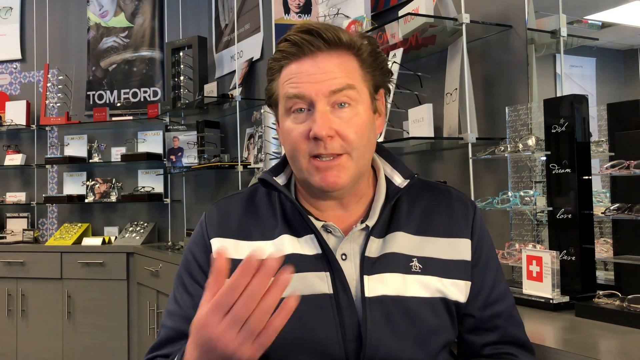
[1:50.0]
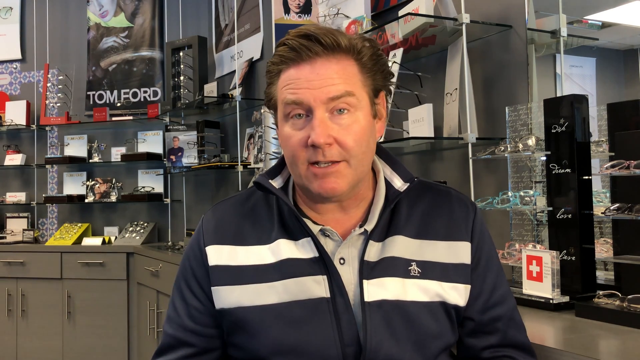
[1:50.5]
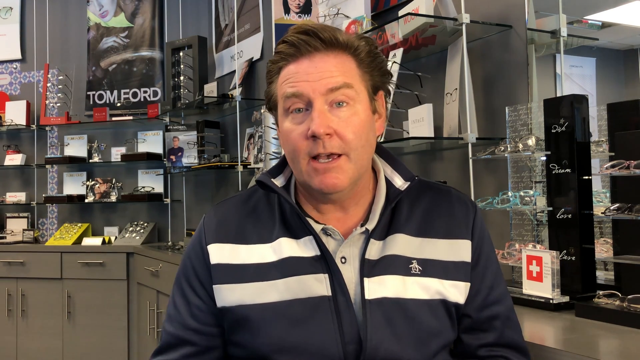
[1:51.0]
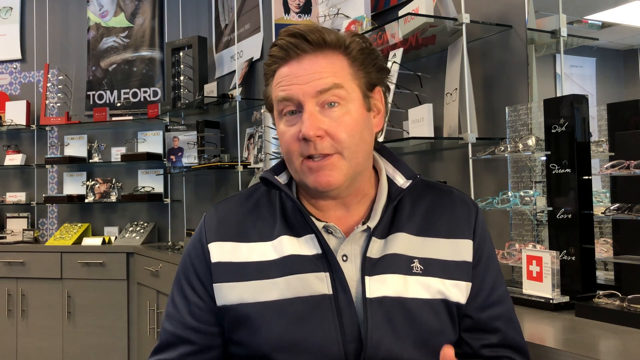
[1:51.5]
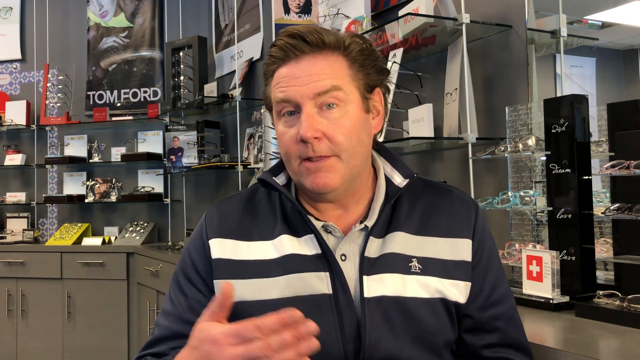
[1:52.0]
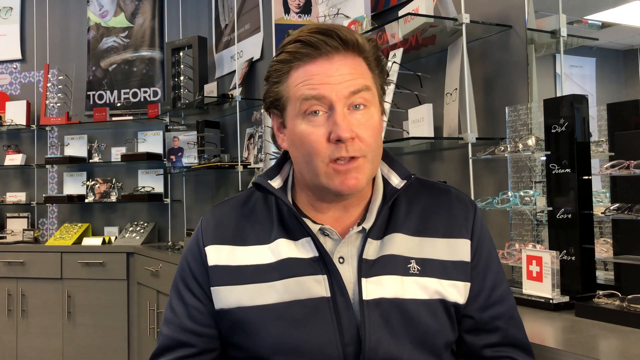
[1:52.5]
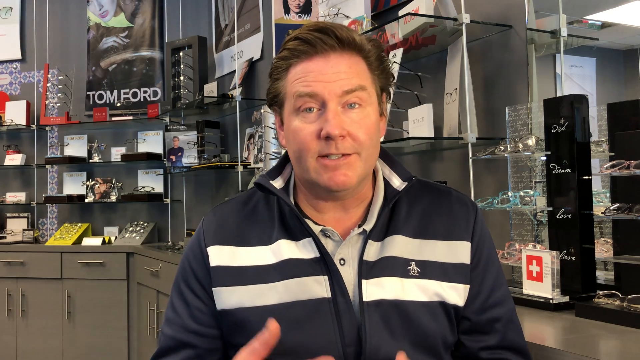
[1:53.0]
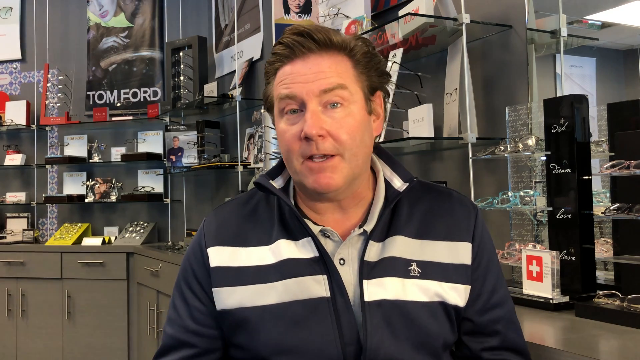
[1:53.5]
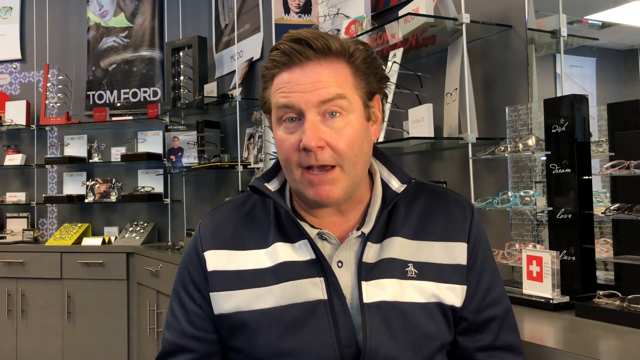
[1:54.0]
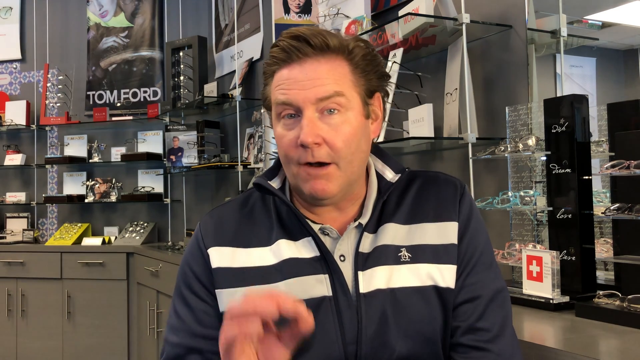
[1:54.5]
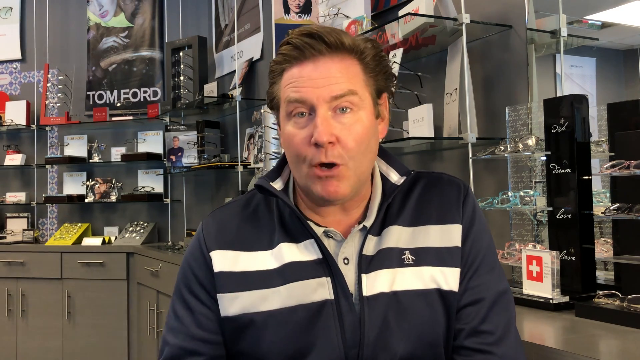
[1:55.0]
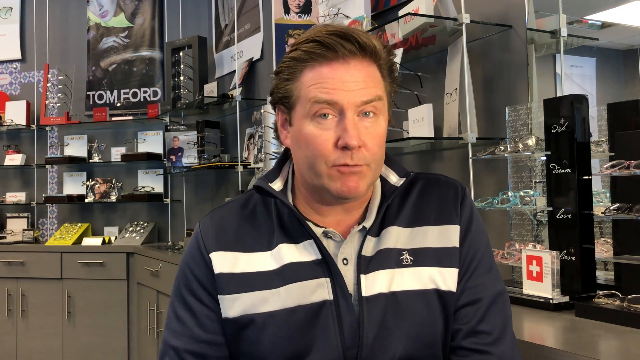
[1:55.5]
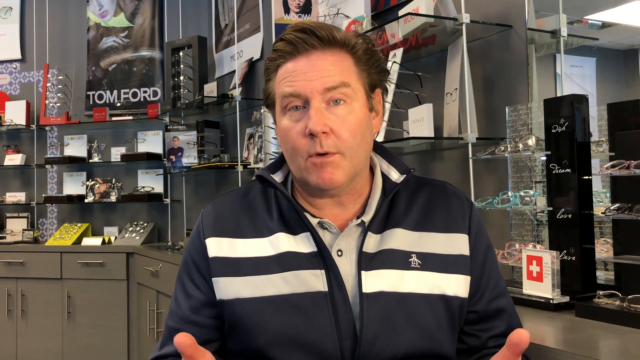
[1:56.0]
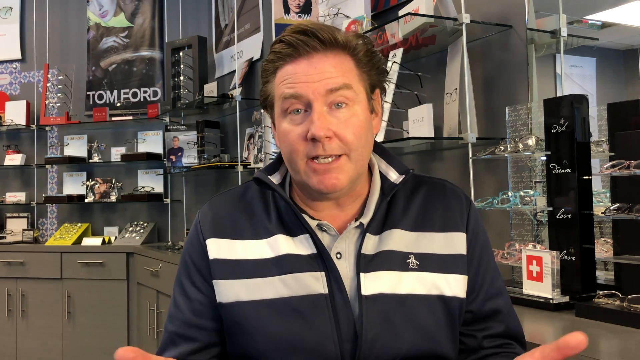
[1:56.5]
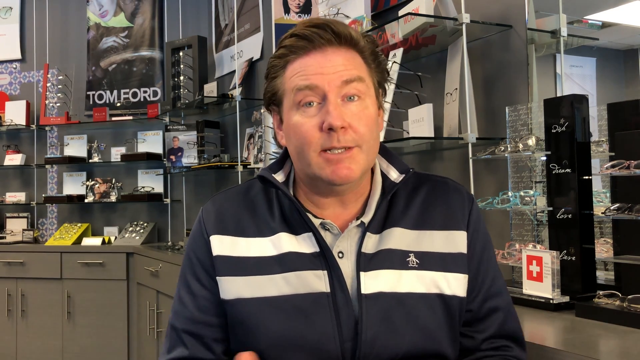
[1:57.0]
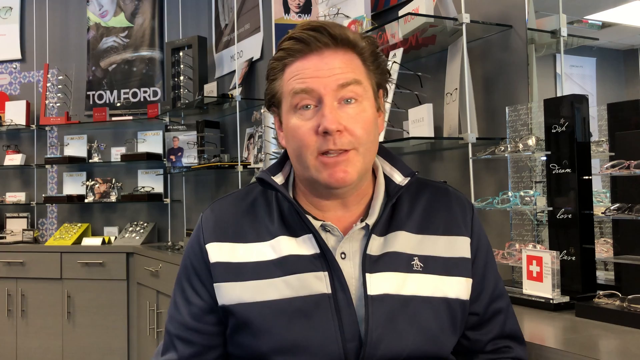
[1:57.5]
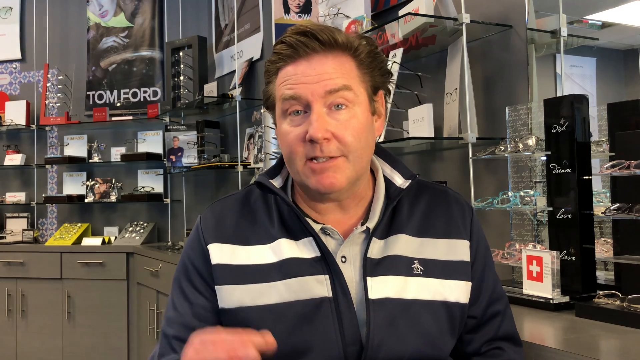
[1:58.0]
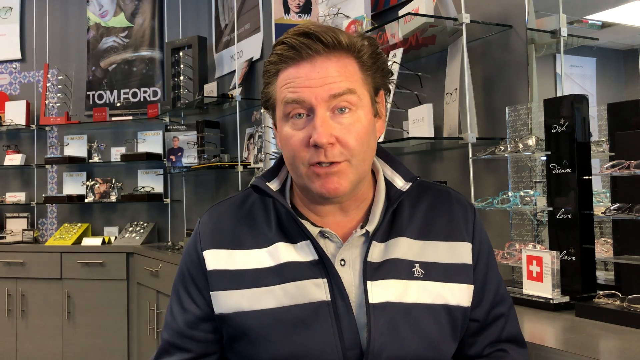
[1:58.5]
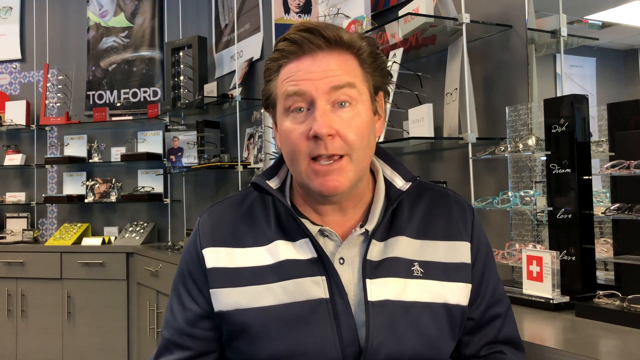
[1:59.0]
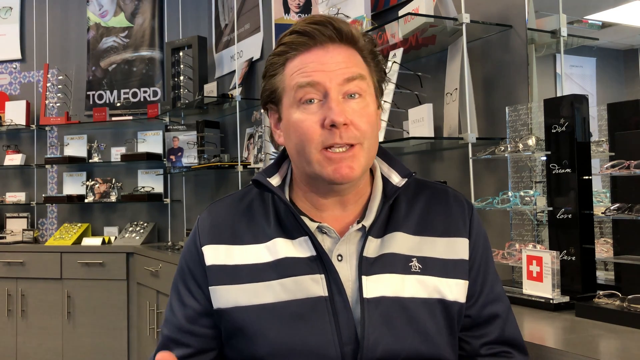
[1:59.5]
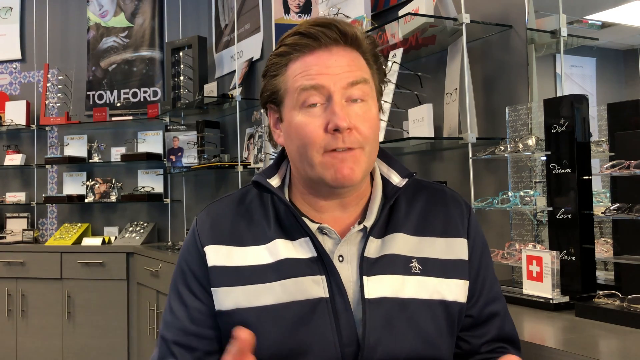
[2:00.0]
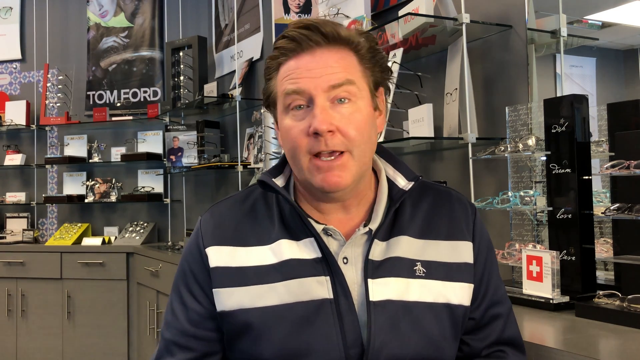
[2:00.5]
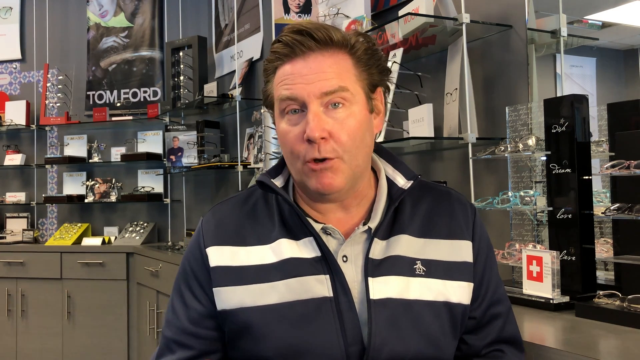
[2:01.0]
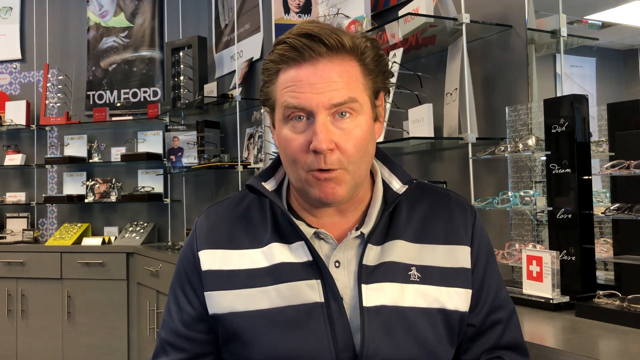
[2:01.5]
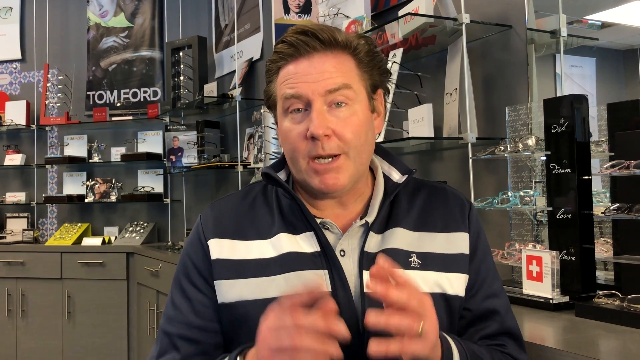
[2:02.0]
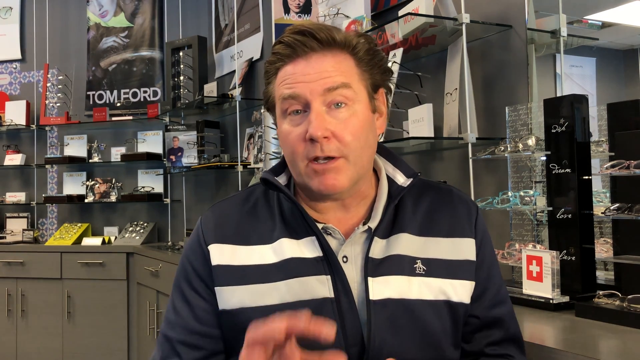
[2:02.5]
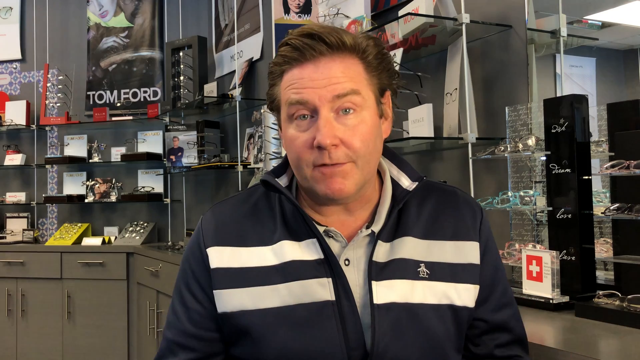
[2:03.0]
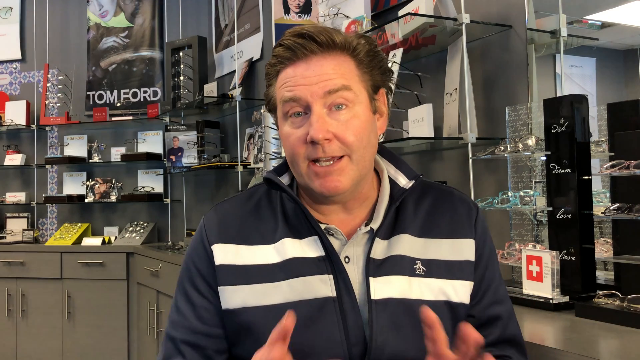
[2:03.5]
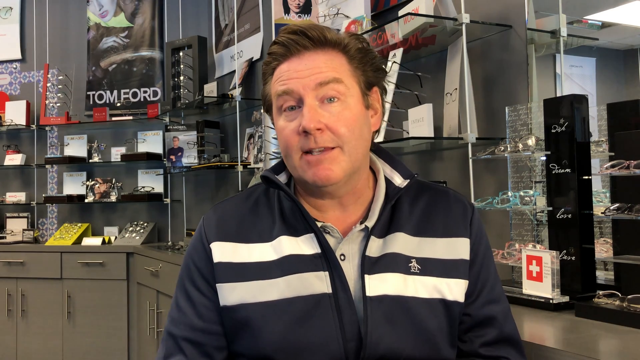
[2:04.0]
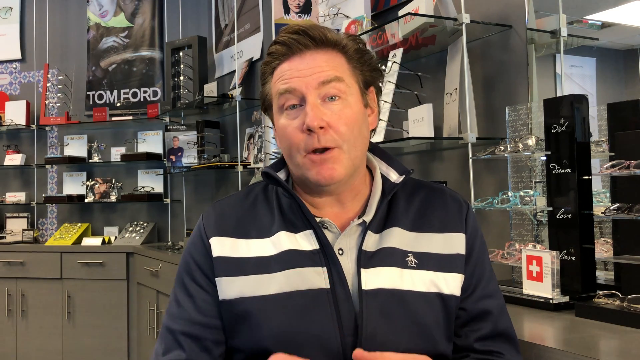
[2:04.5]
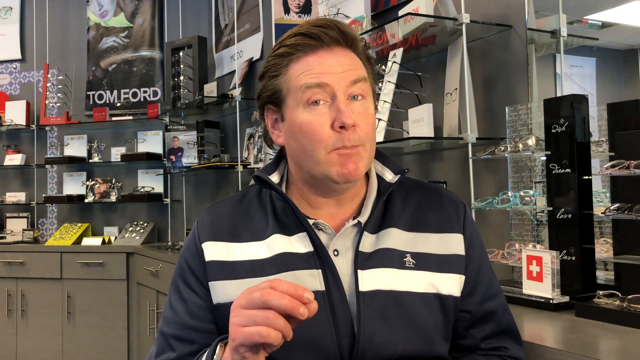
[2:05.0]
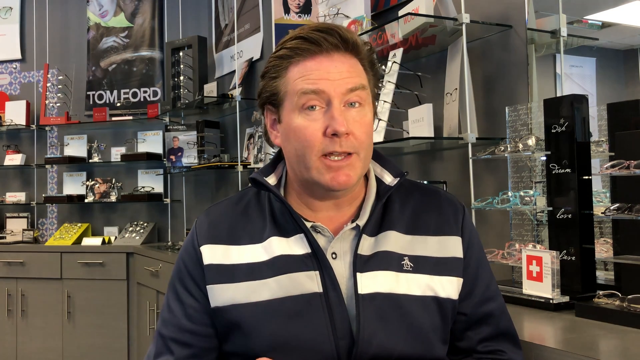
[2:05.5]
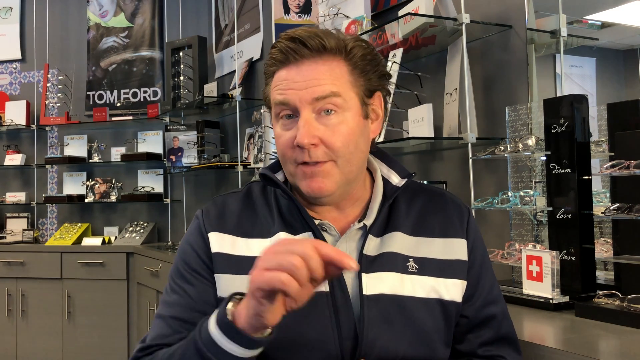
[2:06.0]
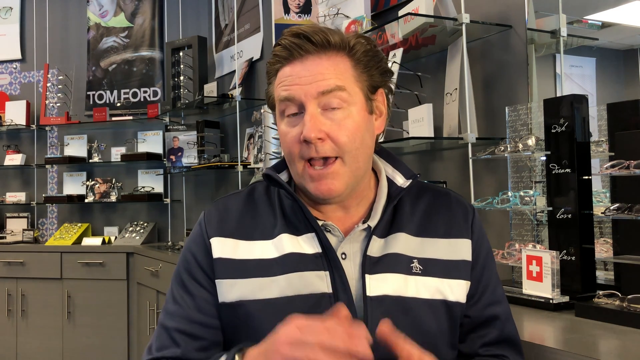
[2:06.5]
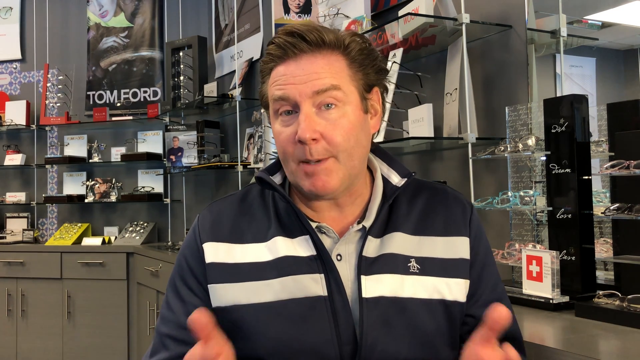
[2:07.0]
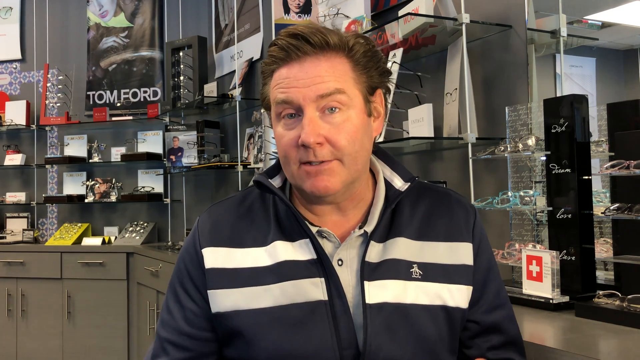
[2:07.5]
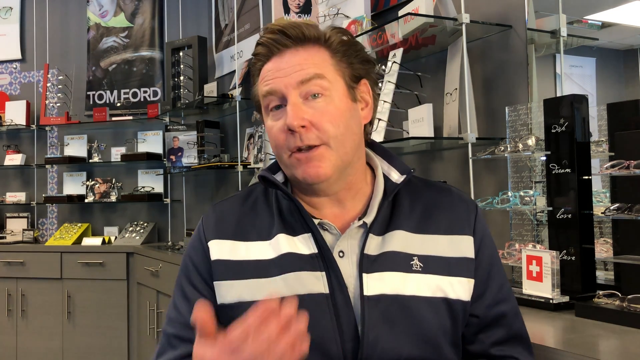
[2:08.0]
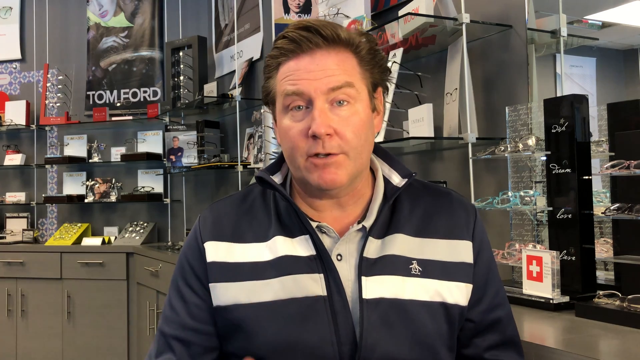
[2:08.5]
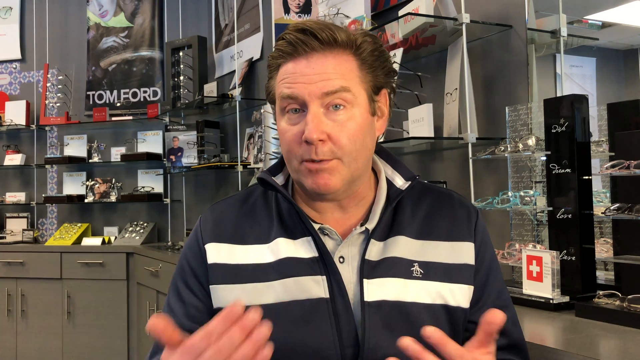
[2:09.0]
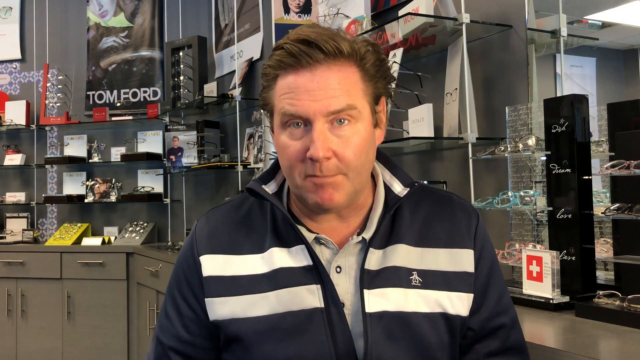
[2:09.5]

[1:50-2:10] The optometrist, an older man with short brown hair, wears a blue jacket with horizontal white dotted, dashed lines in a sort of eye doctor setting. A Tom Ford poster and some females are in the background, along with eyewear, many glasses, cupboards and other optometry tools. No other males and no animals appear, and the setting stays the same.